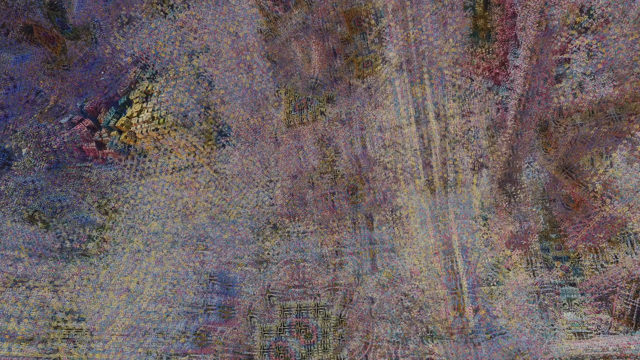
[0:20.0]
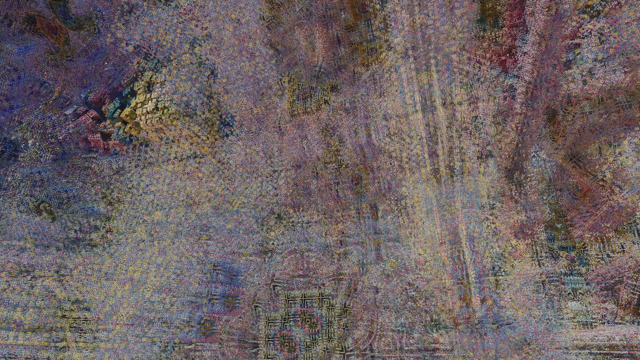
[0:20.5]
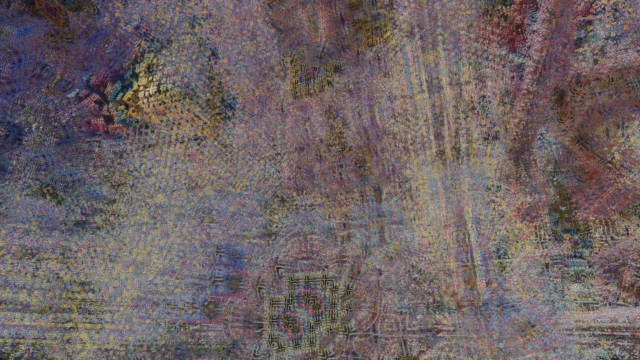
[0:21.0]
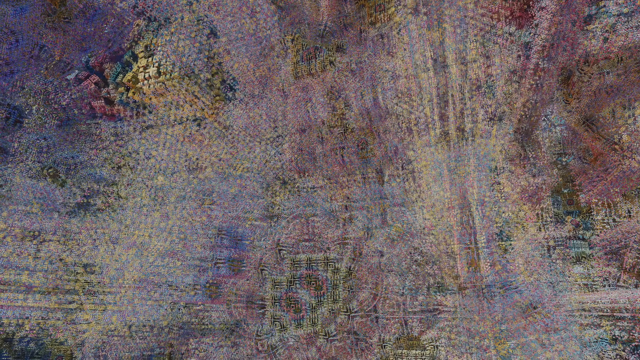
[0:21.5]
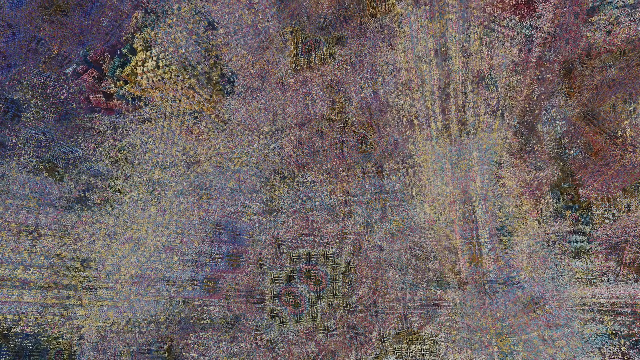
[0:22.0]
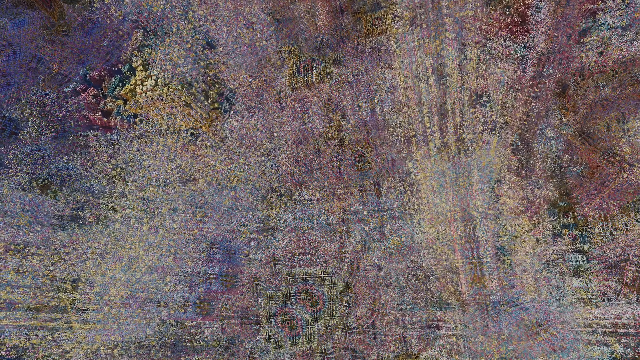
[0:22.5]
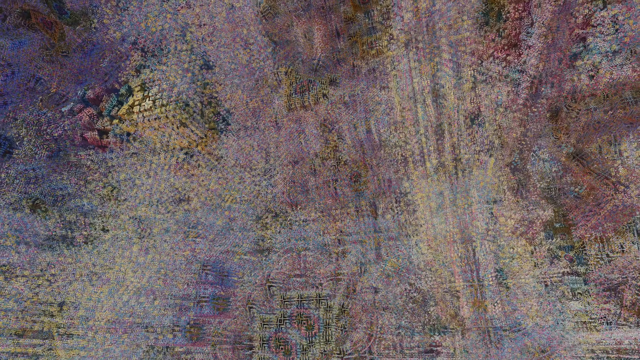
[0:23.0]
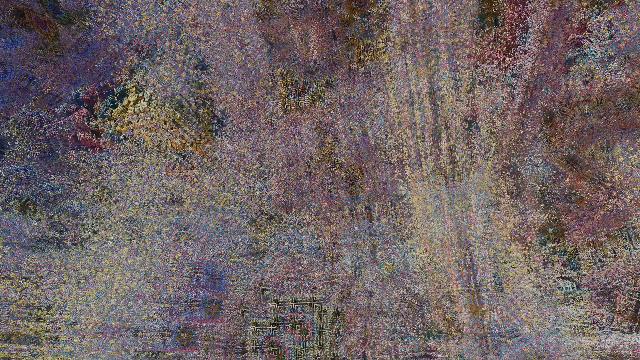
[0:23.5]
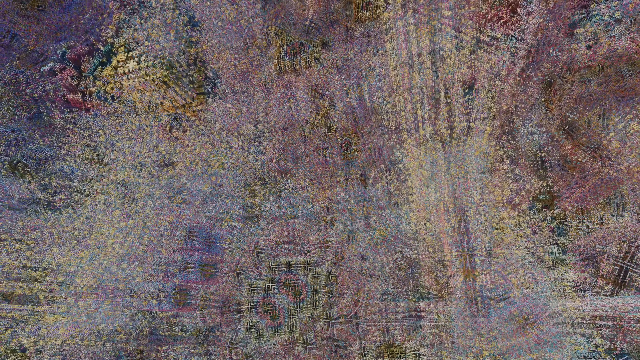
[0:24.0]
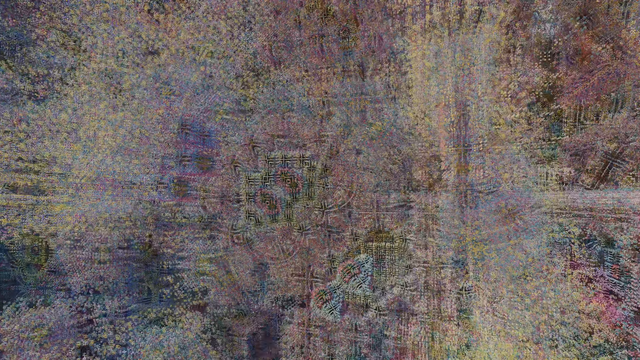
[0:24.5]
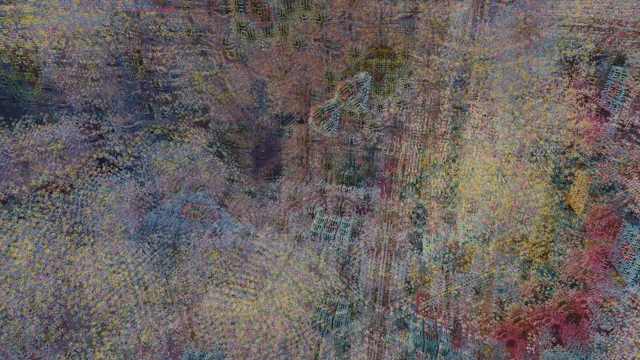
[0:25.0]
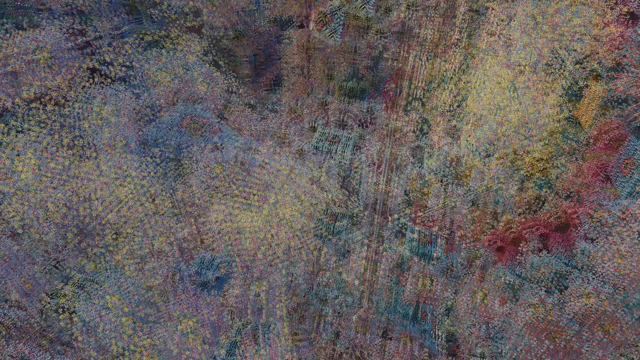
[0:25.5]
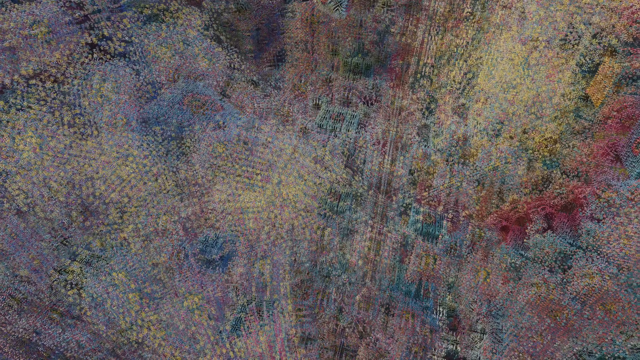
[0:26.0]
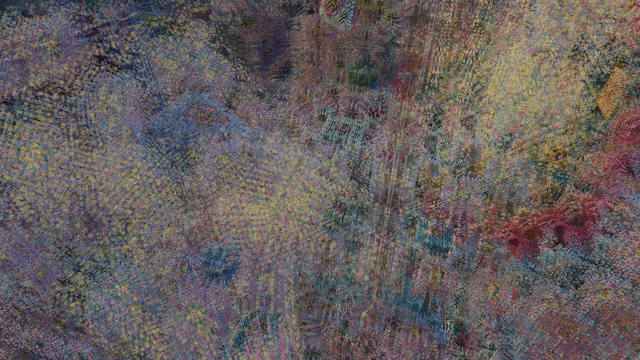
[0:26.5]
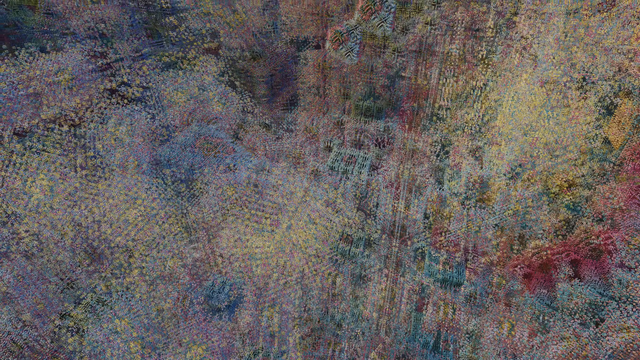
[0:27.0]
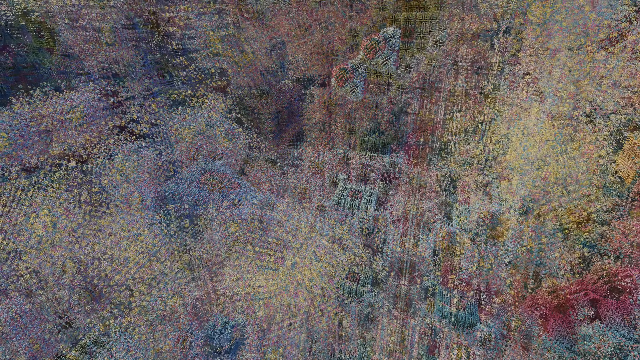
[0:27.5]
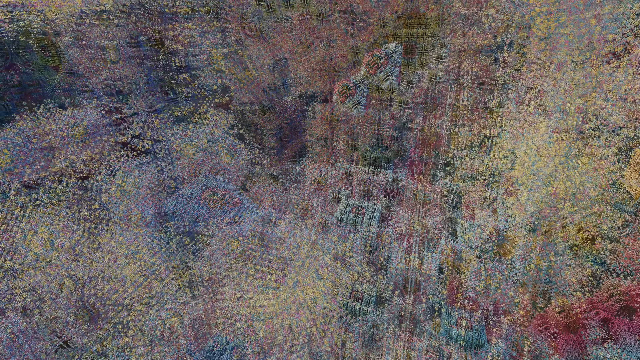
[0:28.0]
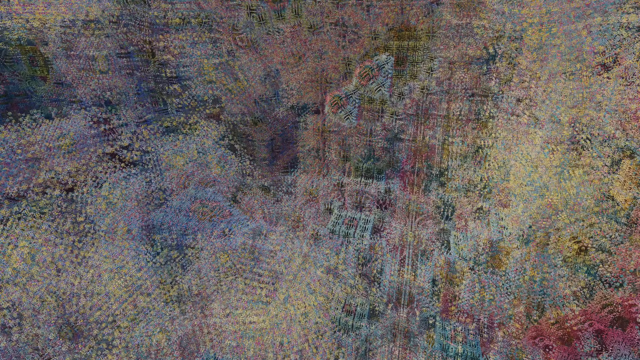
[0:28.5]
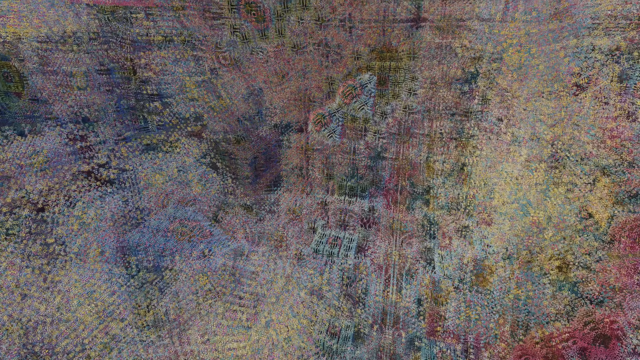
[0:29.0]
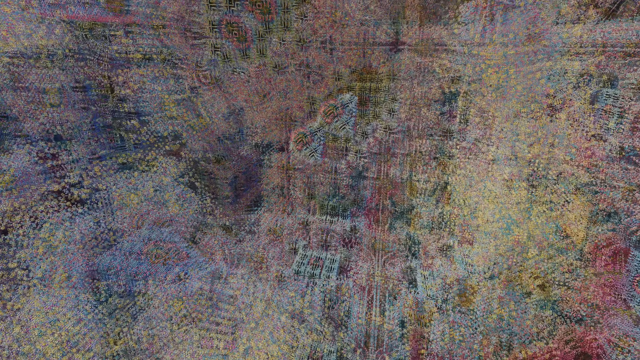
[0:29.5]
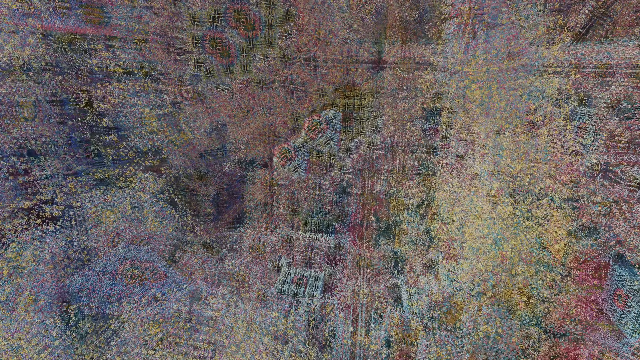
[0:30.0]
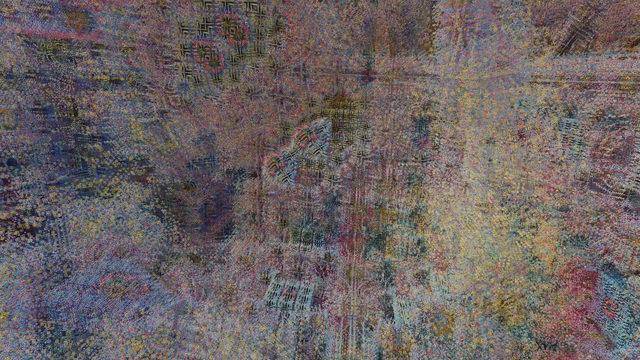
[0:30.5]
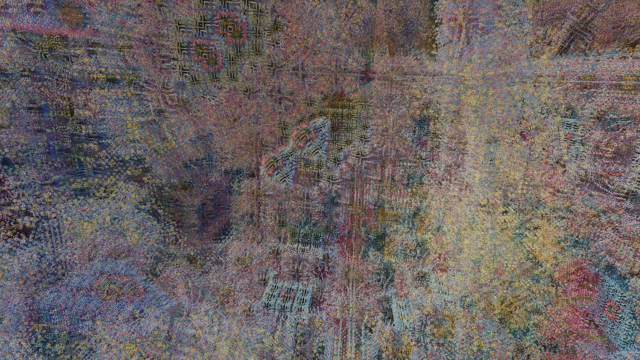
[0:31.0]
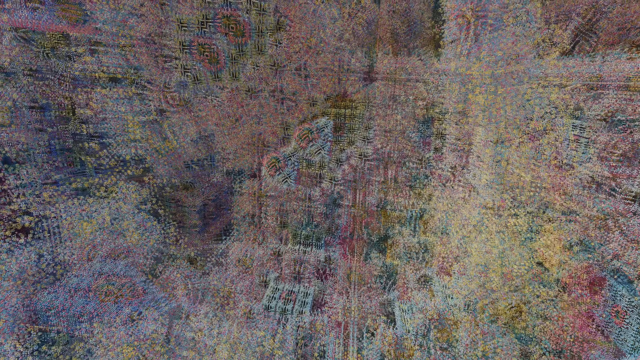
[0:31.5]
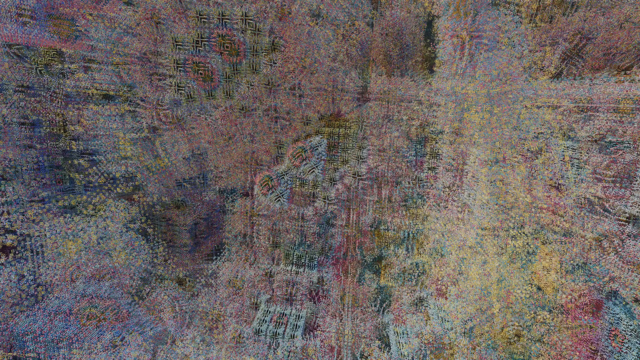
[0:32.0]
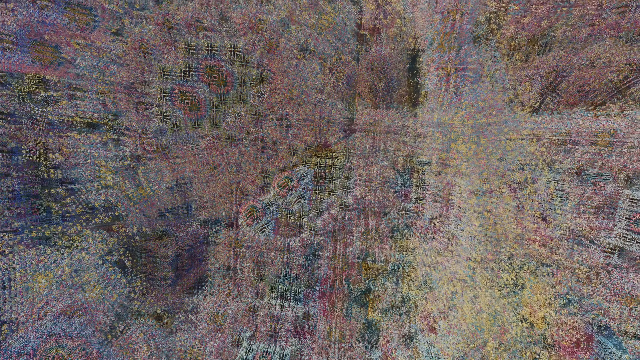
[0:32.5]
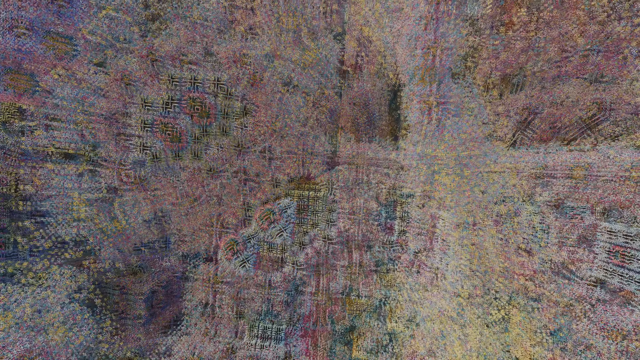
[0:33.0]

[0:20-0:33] The image looks like an art piece of sorts with a kind of tapestry look, almost like a super up-close view of paint on a canvas tapestry. It is in shades of blue, brown, purple and a kind of olive-y brown. A camera effect is kind of panning all around, showing 1960s-looking floral designs. Toward the left side, almost square blocks appear in lavender blue and a brownish olive color. Kind of toward the middle of the image are squares of an almost olive-y brown color, along with kaleidoscope-like shapes of purple, blue and lavender. The view kind of pans up and down around the art piece, almost with the effect of walking through a holographic museum of sorts. As it pans down there is almost a floor effect, kind of blue, with what looks like some black squares. The same colors kind of repeat all over the image, and geometric shapes give a trippy effect.